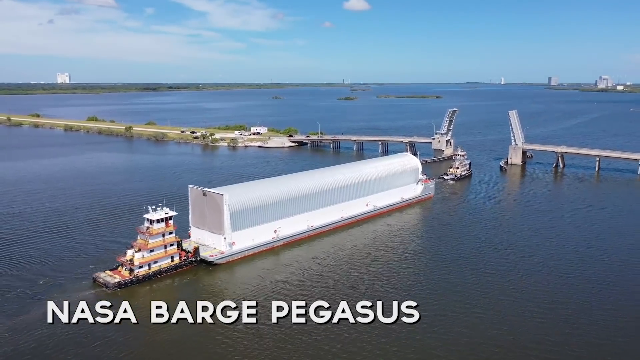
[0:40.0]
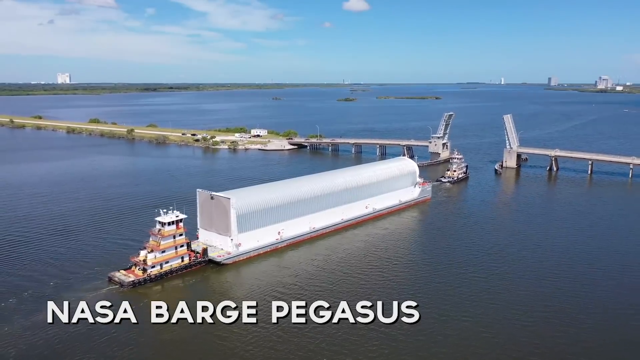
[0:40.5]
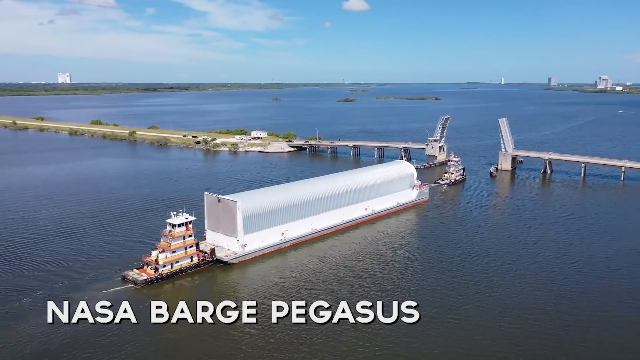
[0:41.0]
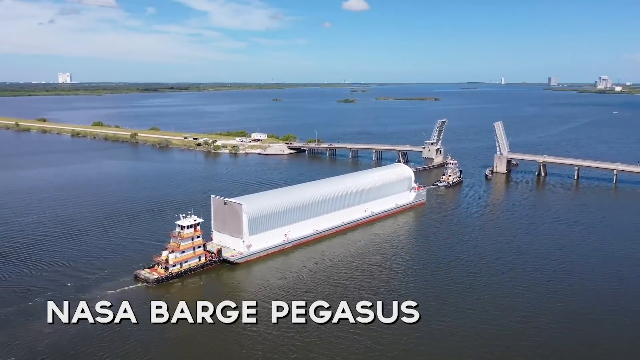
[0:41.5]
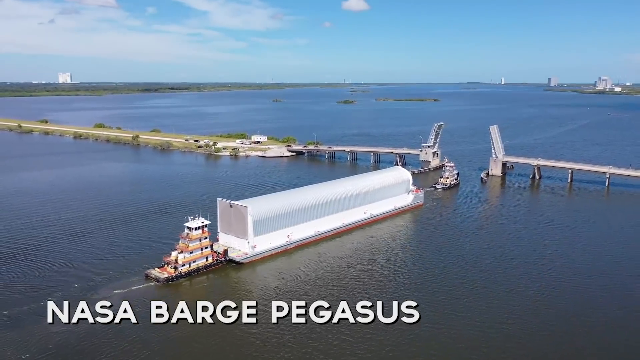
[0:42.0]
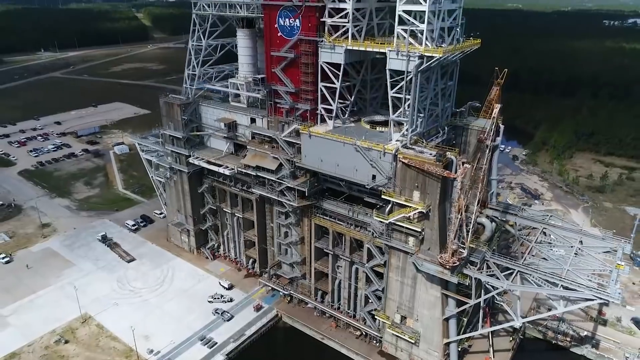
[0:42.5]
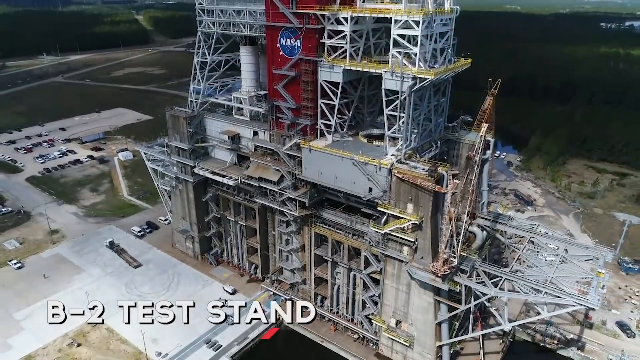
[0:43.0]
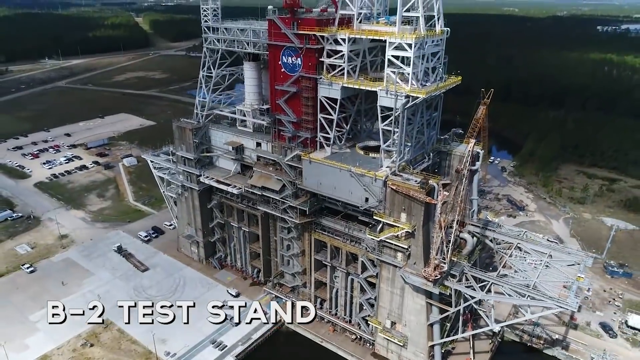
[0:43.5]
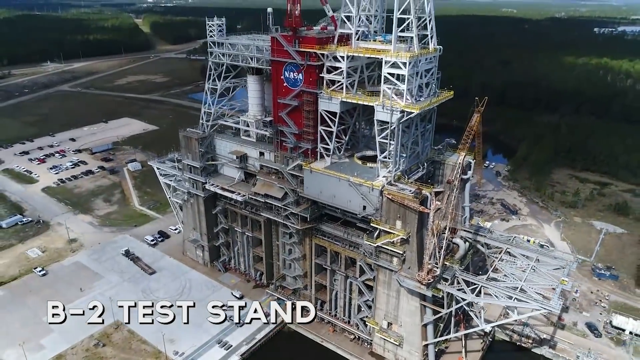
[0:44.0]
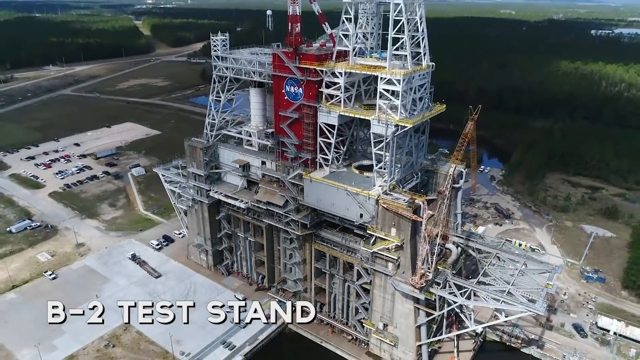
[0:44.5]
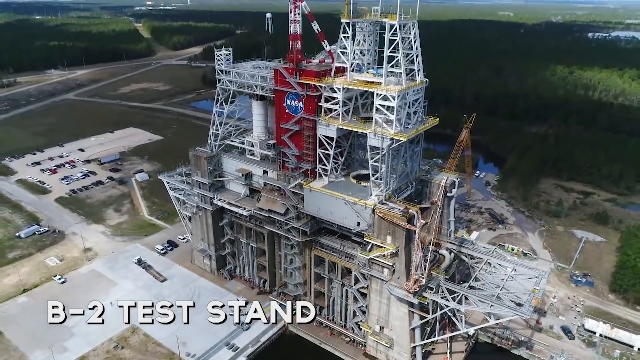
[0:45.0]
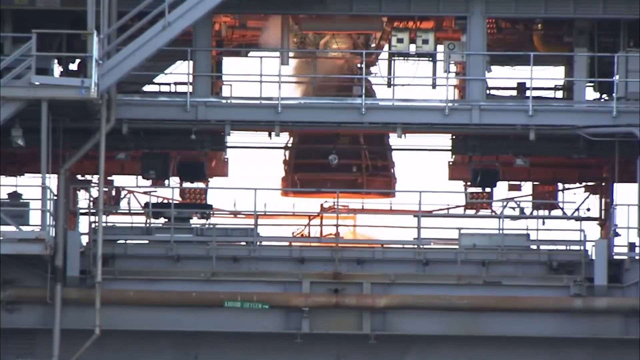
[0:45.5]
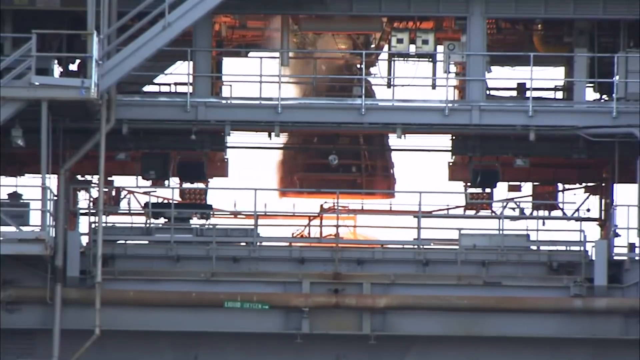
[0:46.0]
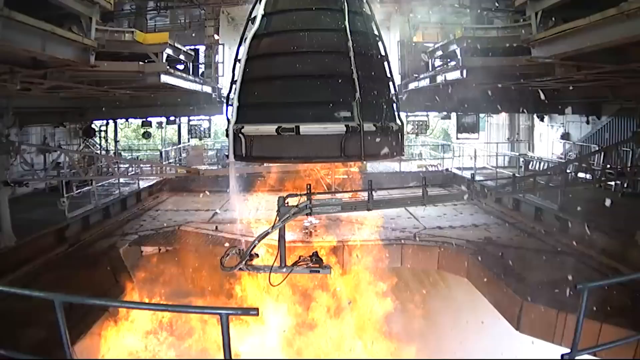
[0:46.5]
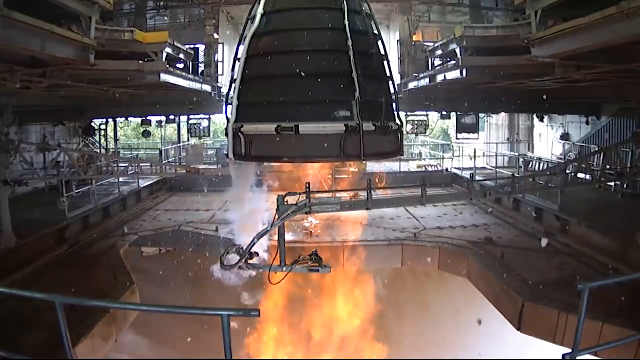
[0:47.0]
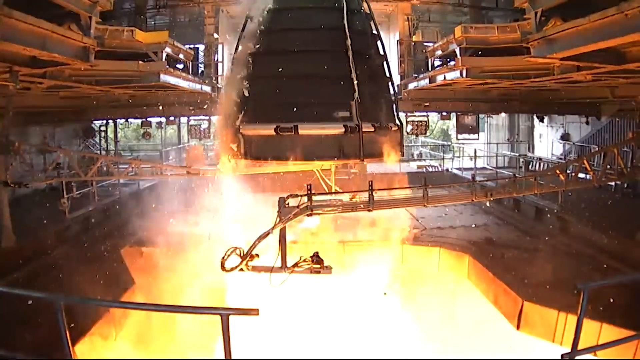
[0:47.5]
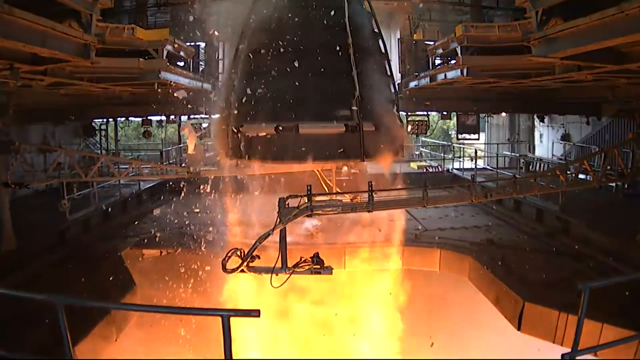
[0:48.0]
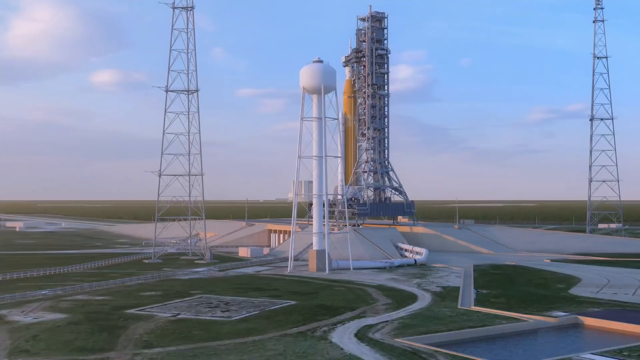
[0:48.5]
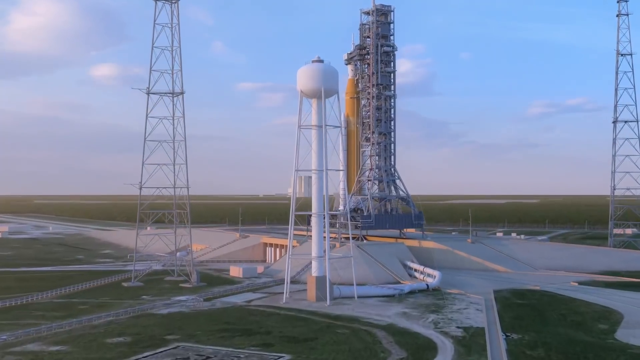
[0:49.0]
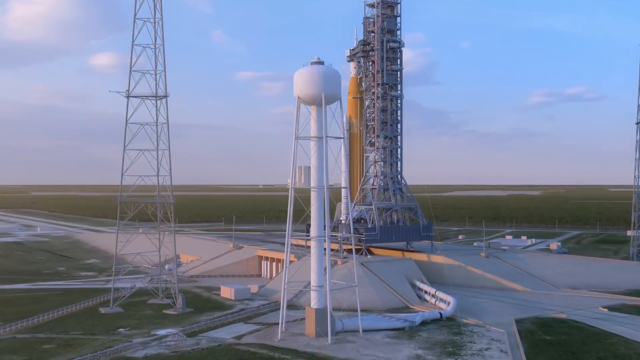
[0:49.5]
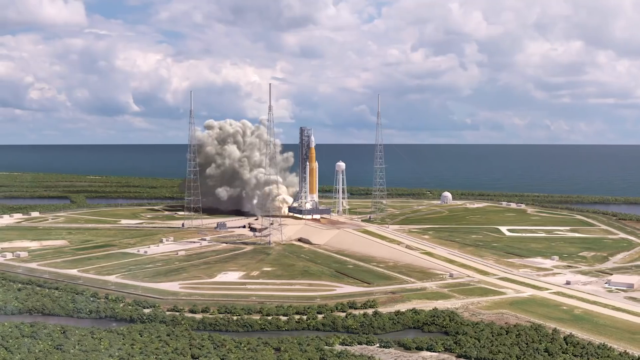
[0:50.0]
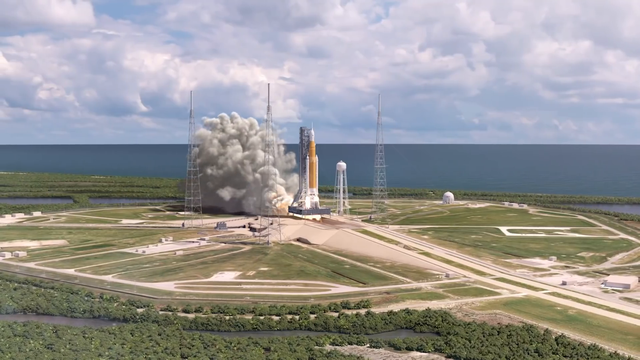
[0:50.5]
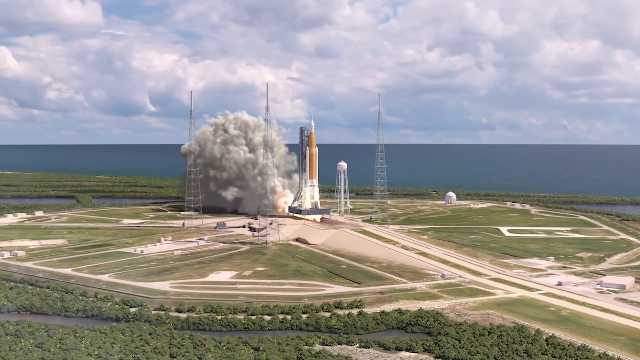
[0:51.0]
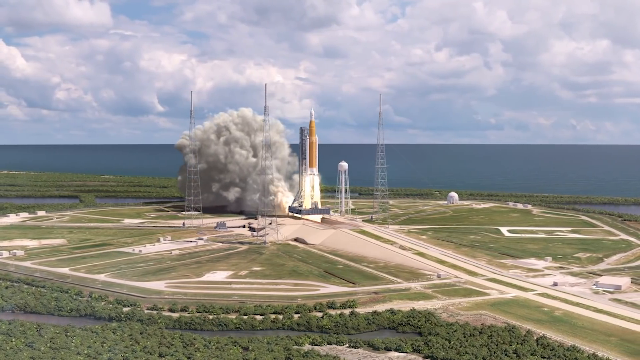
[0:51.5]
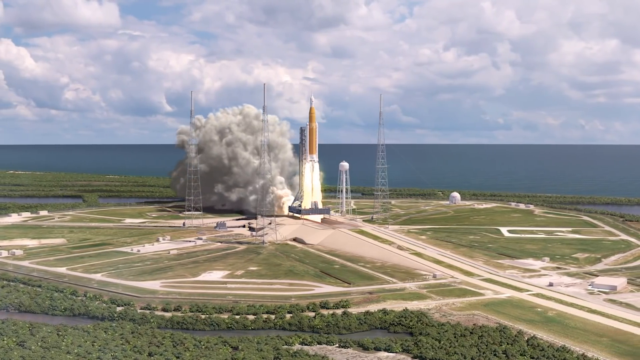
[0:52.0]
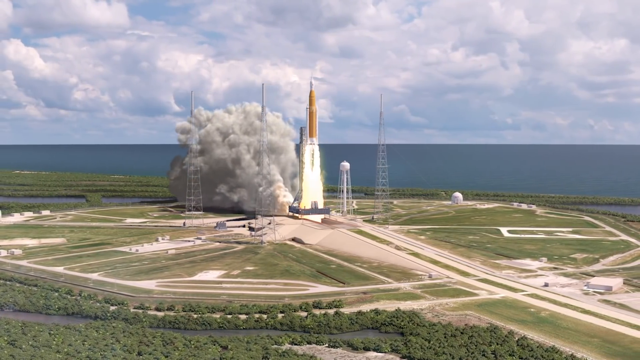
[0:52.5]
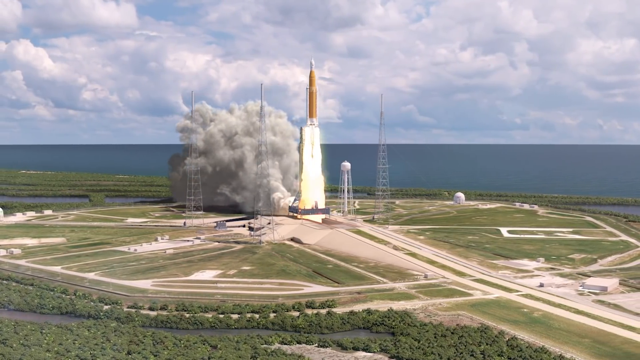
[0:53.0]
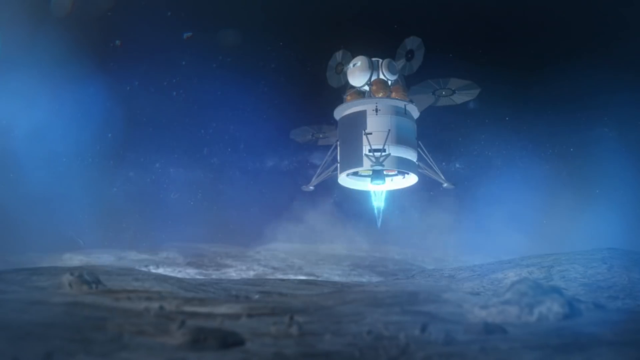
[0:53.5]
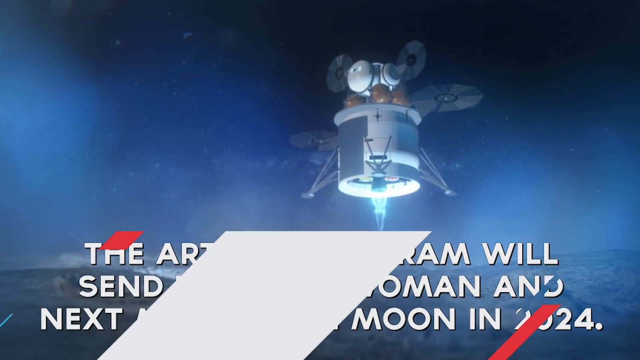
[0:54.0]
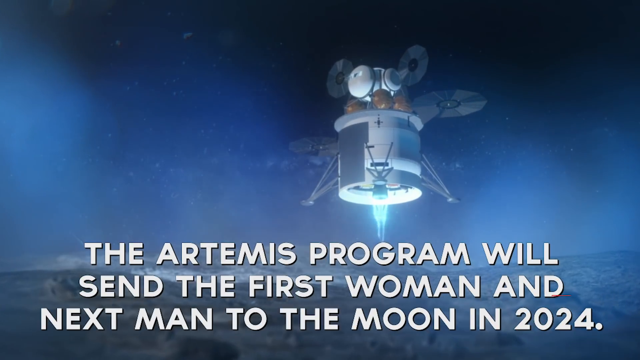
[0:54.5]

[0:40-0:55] A rocket takes off and goes up into space. A satellite is shown in space. The NASA barge Pegasus appears again, along with the B-2 test stand. Text reads "the Artemis program sends the first woman and next man to the moon in 2024."